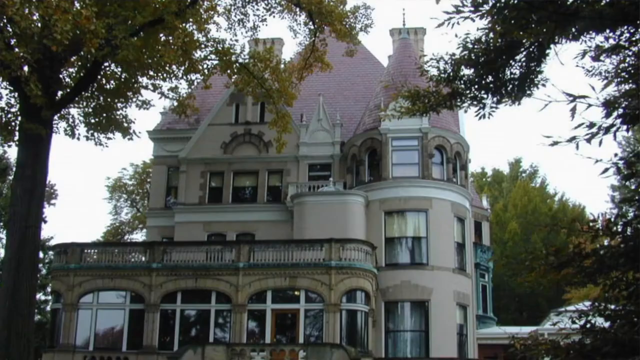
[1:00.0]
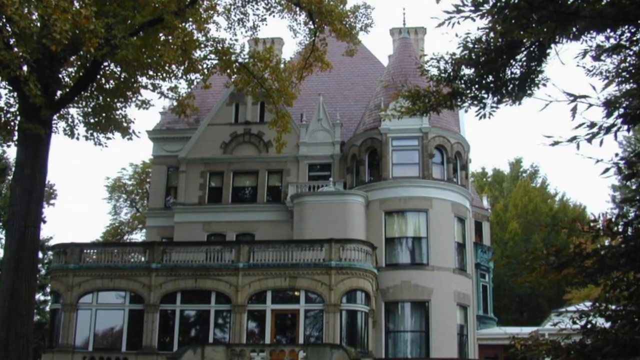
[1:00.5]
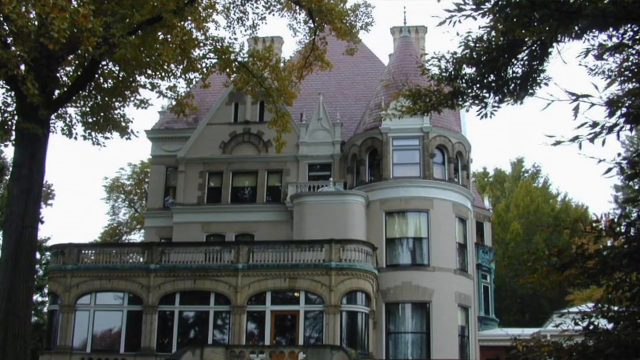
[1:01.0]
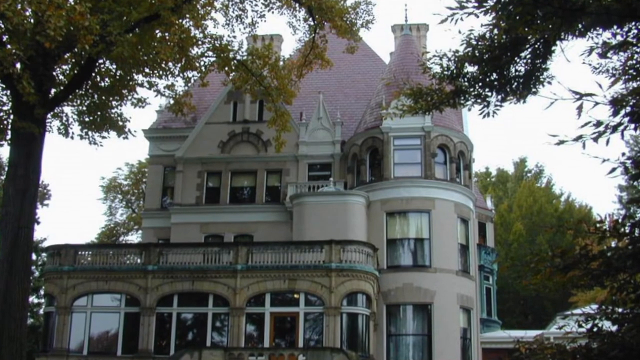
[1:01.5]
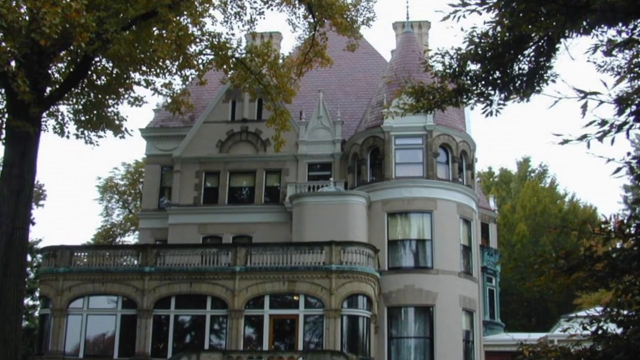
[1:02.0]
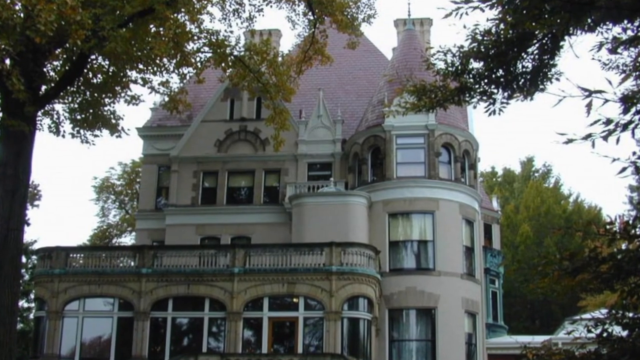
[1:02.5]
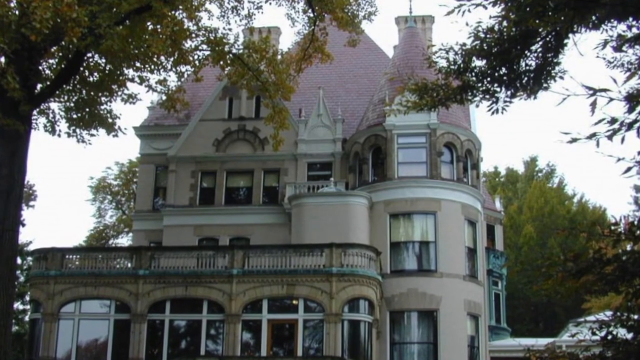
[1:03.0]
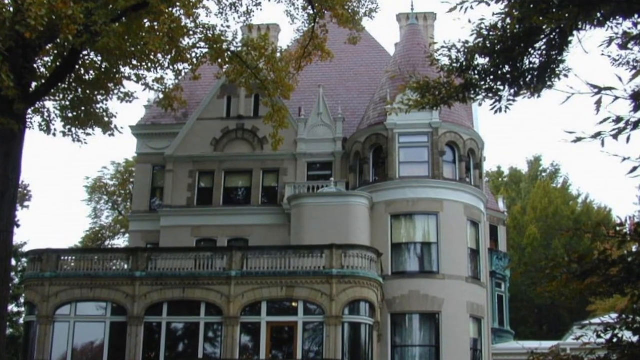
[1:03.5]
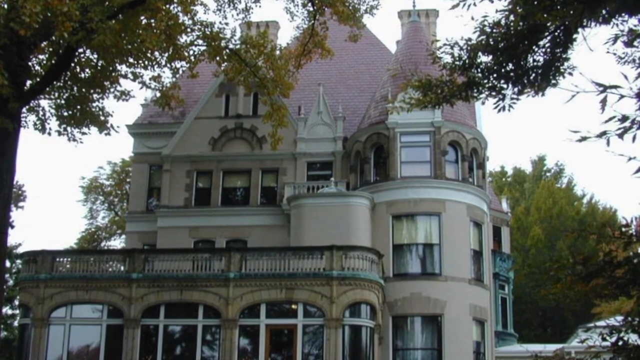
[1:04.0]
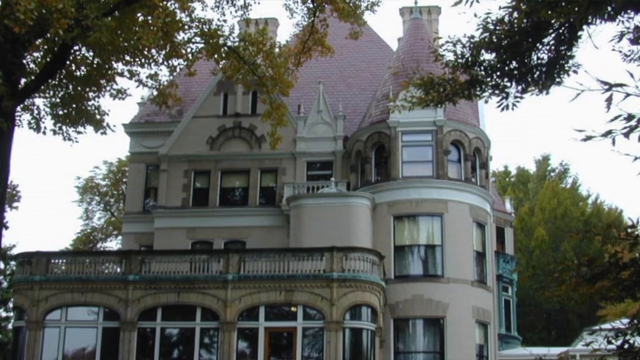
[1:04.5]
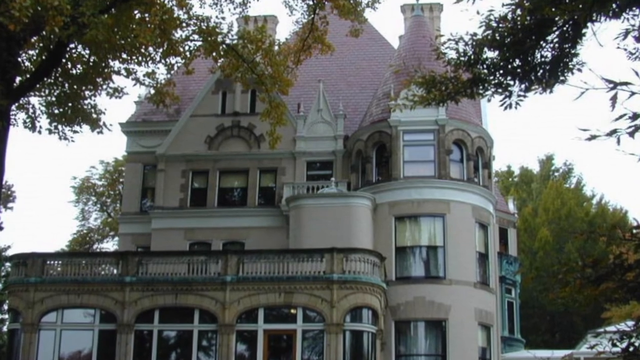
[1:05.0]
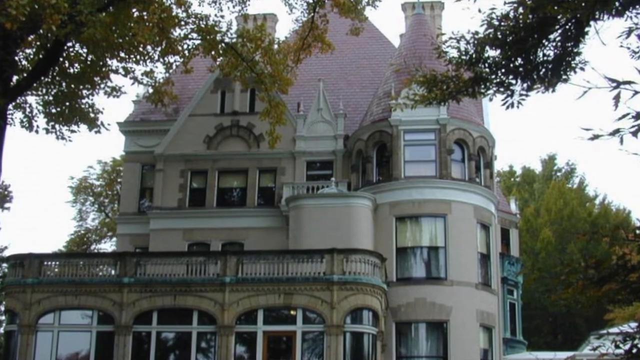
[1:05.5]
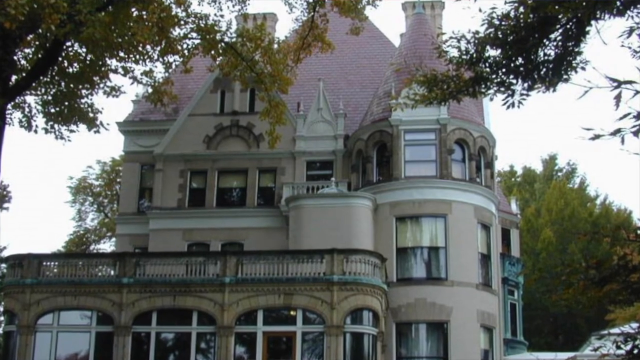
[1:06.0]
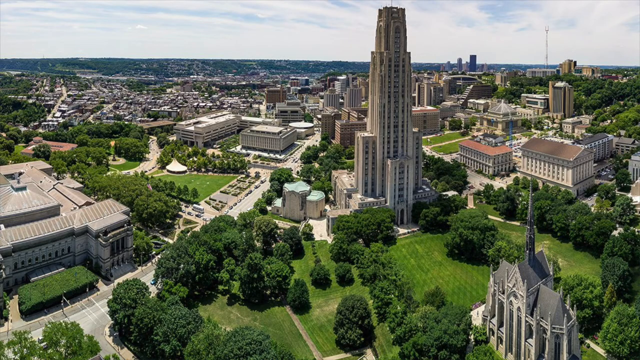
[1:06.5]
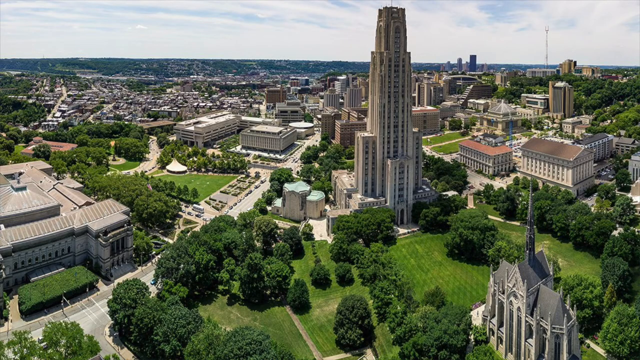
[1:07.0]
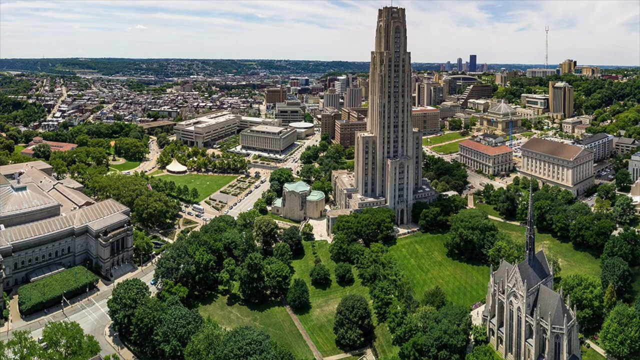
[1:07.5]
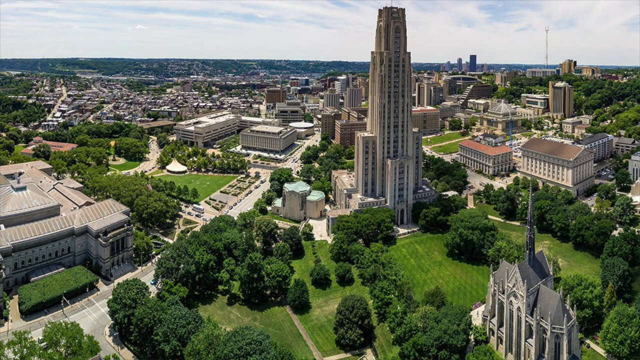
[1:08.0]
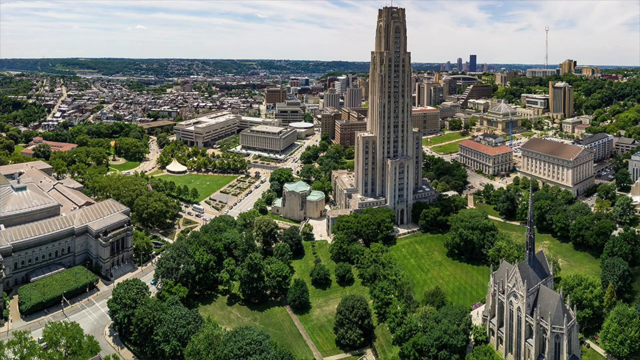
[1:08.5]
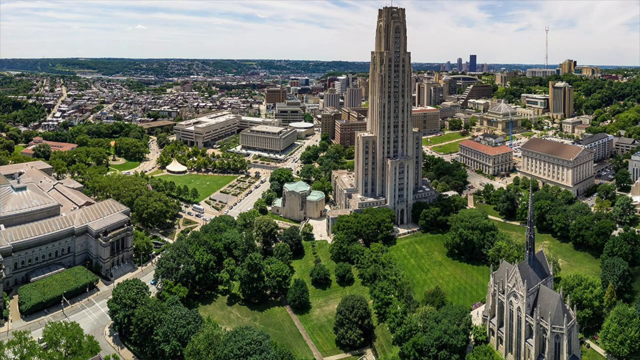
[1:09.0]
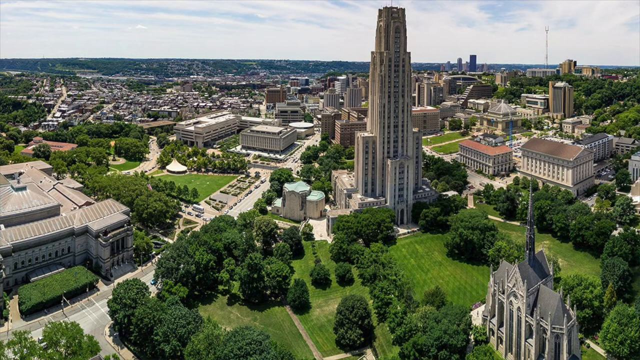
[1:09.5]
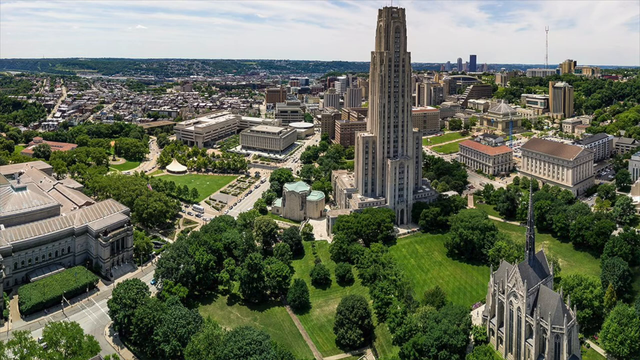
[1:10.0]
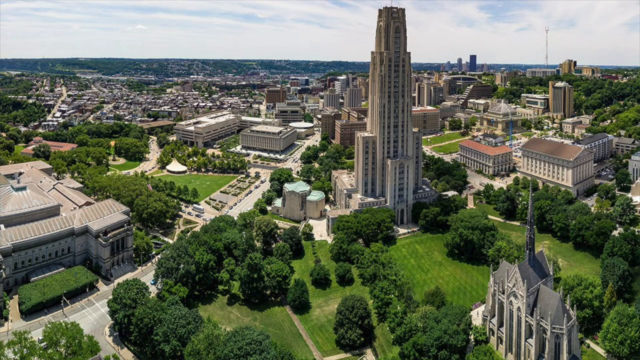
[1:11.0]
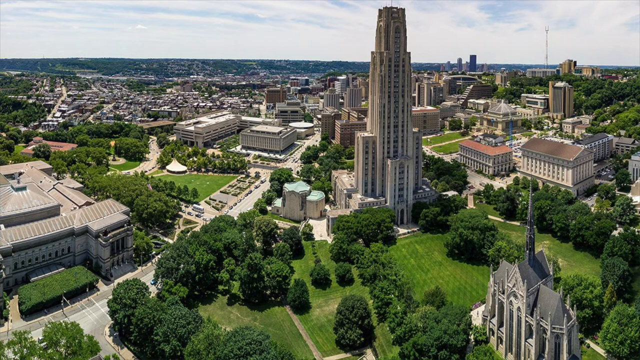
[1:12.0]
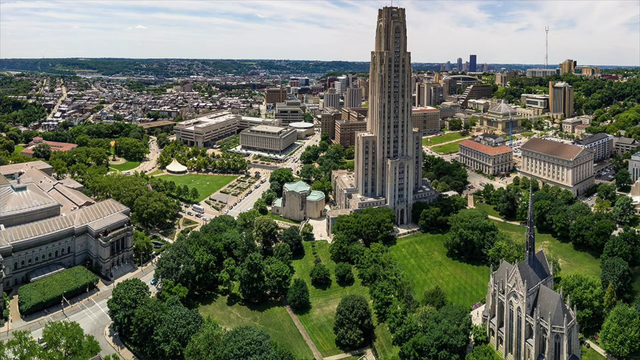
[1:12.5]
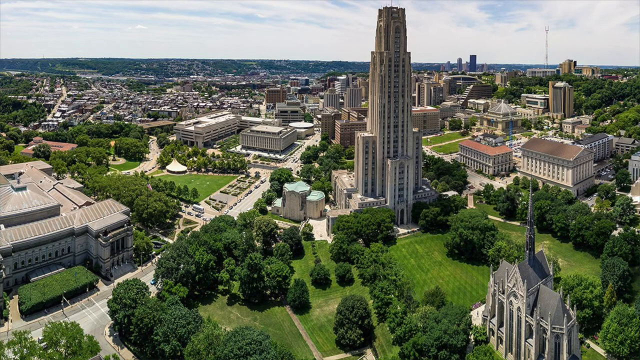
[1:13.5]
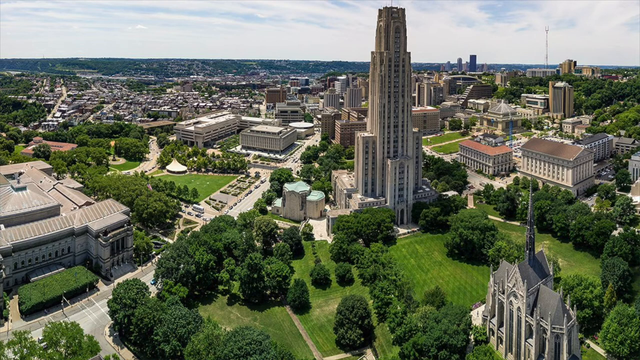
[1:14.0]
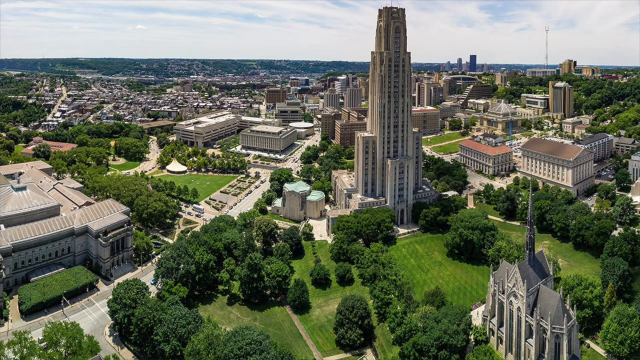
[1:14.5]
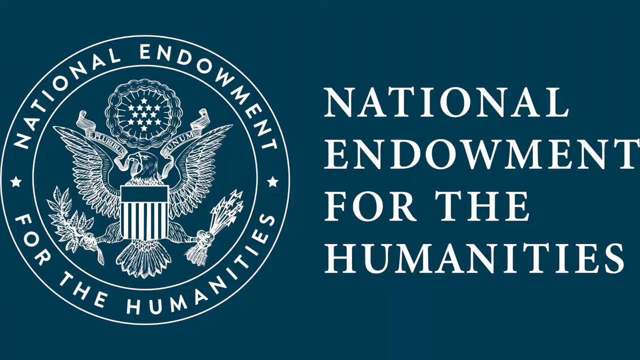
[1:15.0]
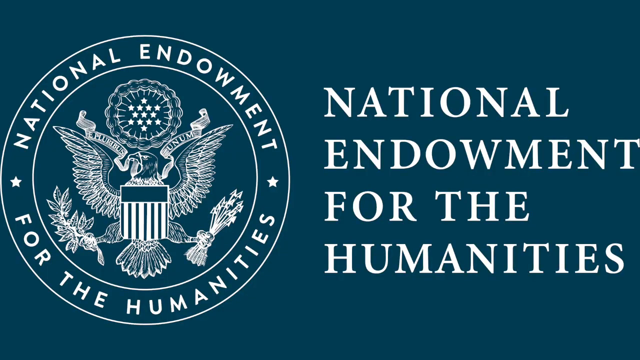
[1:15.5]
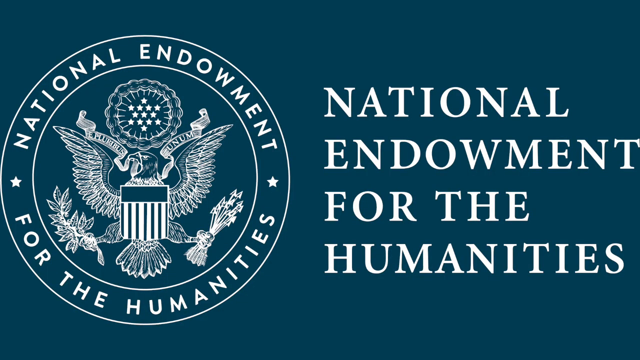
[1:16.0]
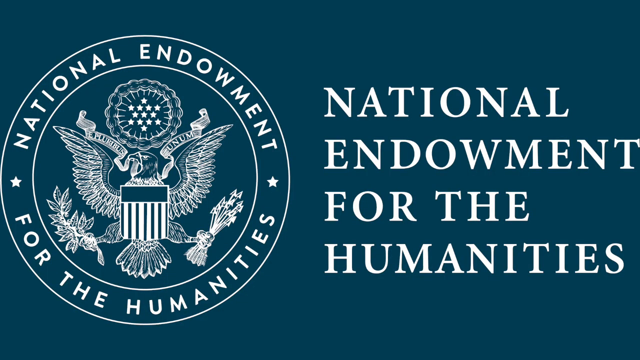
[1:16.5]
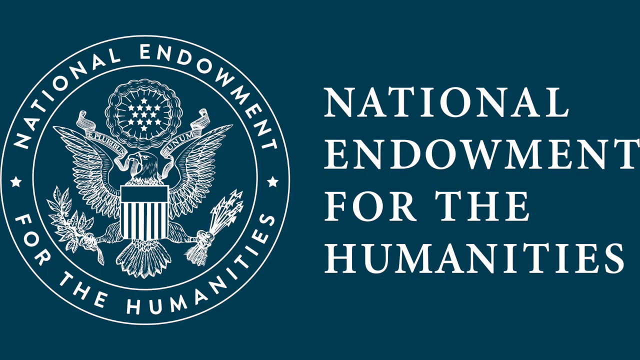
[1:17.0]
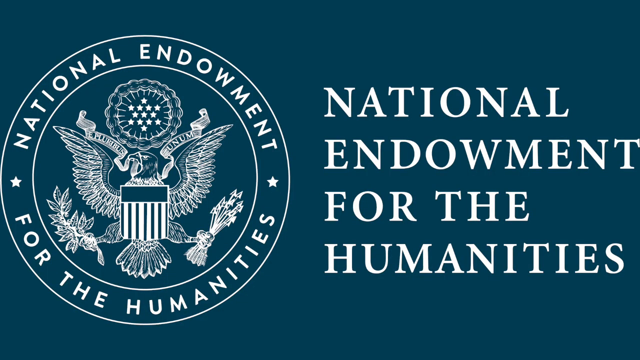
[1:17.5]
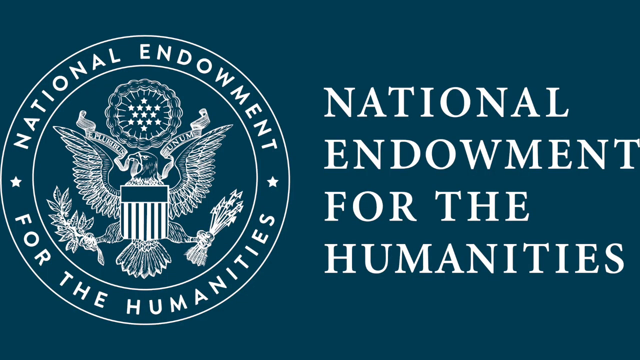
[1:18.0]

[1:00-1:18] The video now shows an image of what appears to be a mansion with white walls and a pink roof. It seems to be about three levels, and the roof extends upward sharply into what appear to be three points, with two chimneys on each side. Trees are visible on both sides of the frame and in the background of the mansion. There appears to be some sort of outdoor patio area with columns and archways separating it from the outside. The camera slowly zooms in on the center of the image. It then transitions to another still image of a modern cityscape. In the foreground is a more rural area with trees and fields of green grass. On the left side there appears to be a large complex, and on the right side there appears to be a church. In the center of the image, slightly offset to the right, is a very tall building. In the background is the downtown area with tall buildings and many rows of smaller buildings on the left side. This image stays on screen for a moment, then transitions to a logo featuring an American eagle with a circle around it that reads "National Endowment for the Humanities," and on the right side the name in white text.